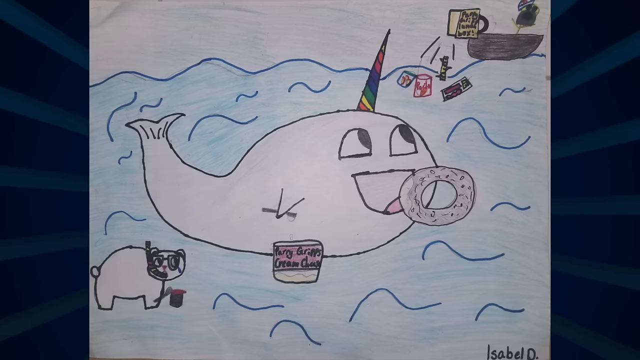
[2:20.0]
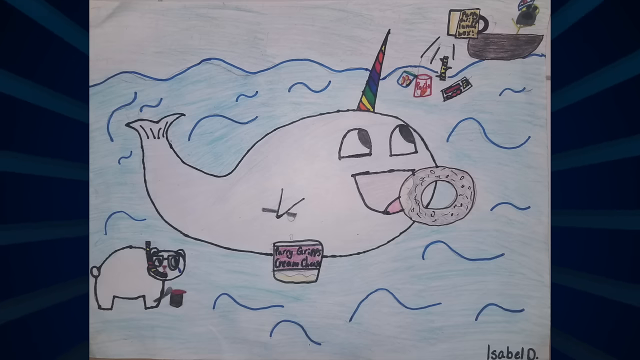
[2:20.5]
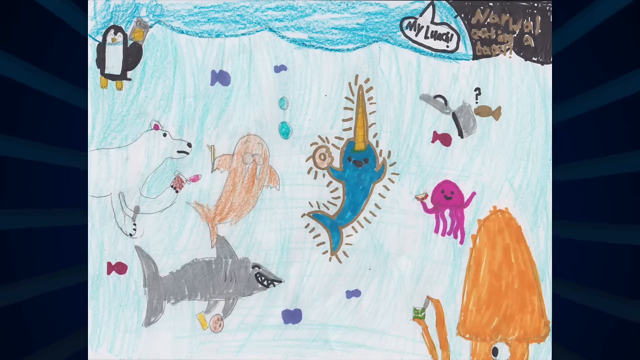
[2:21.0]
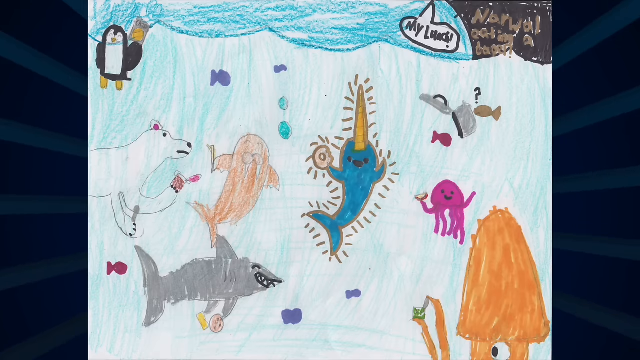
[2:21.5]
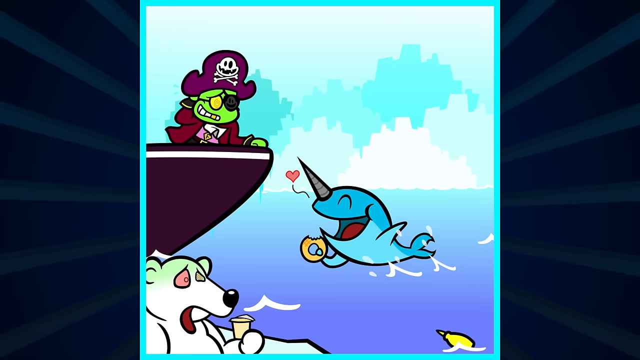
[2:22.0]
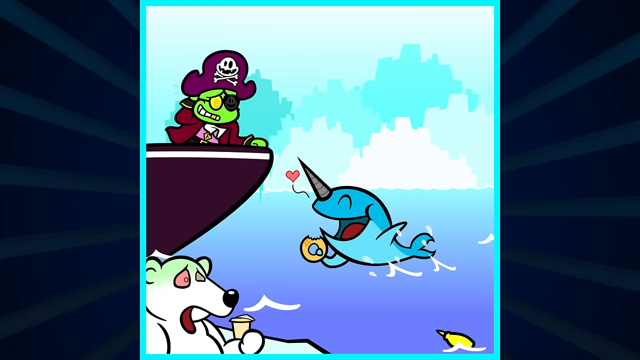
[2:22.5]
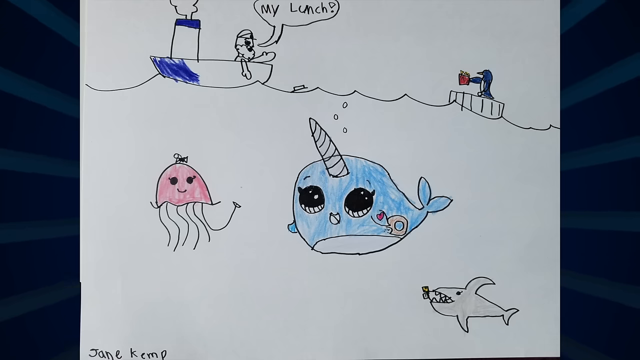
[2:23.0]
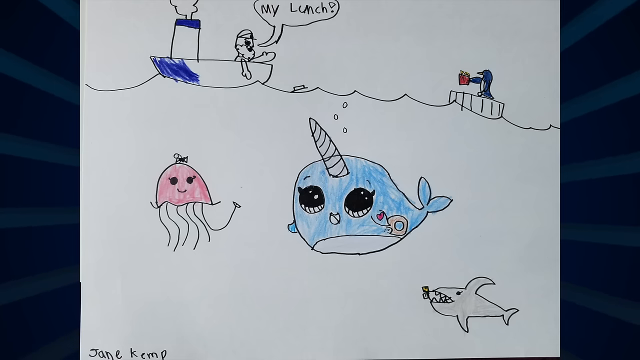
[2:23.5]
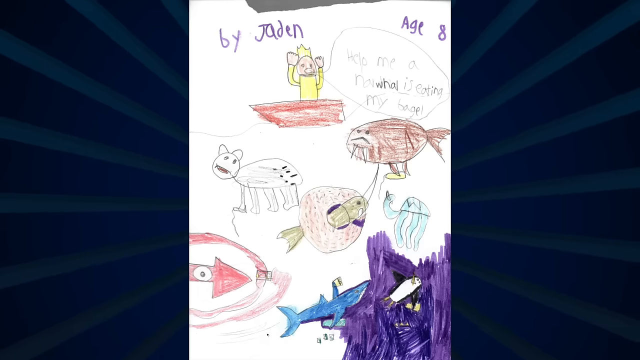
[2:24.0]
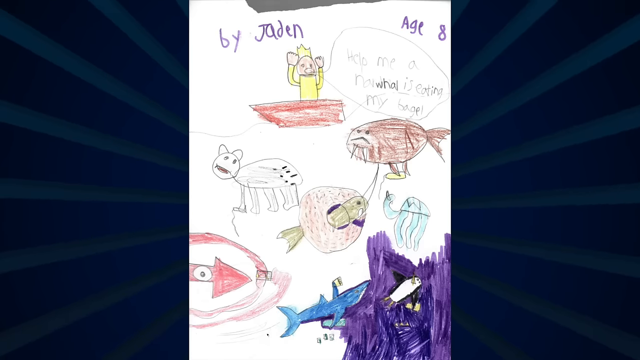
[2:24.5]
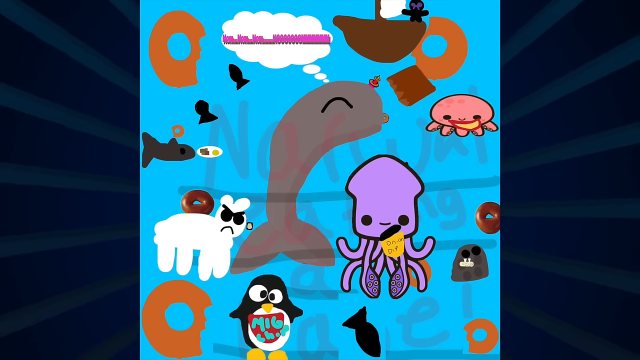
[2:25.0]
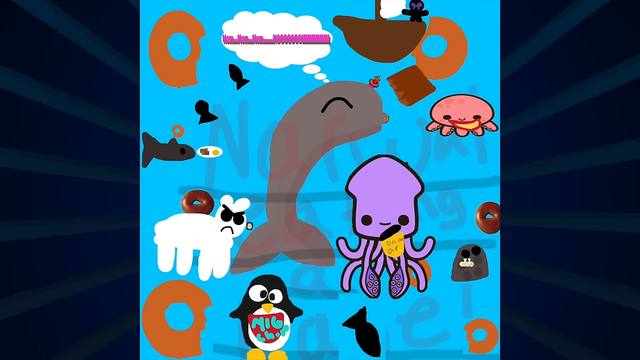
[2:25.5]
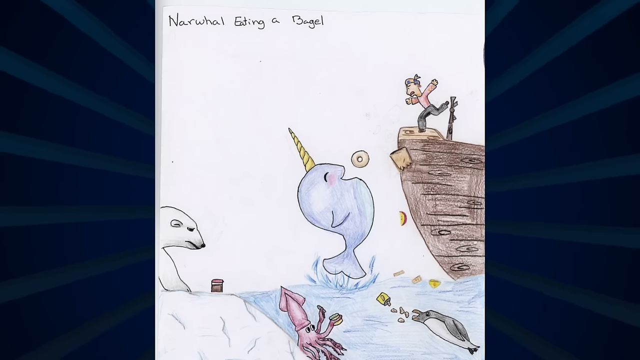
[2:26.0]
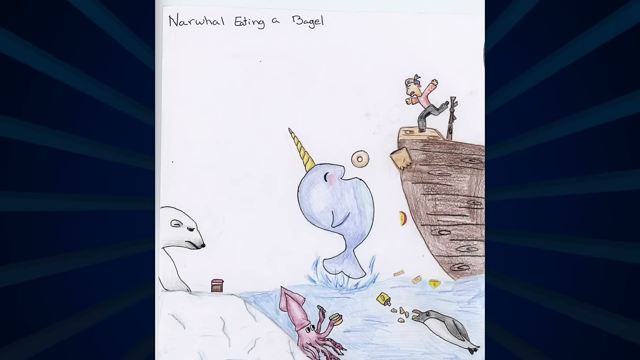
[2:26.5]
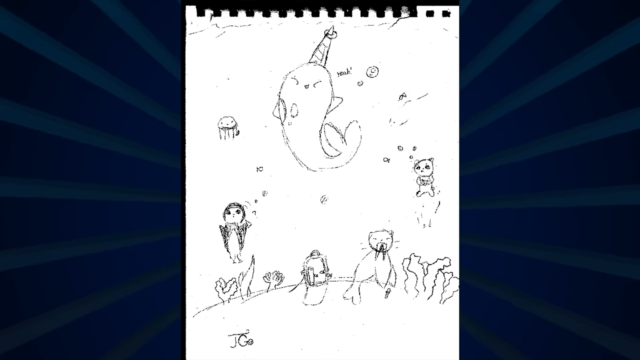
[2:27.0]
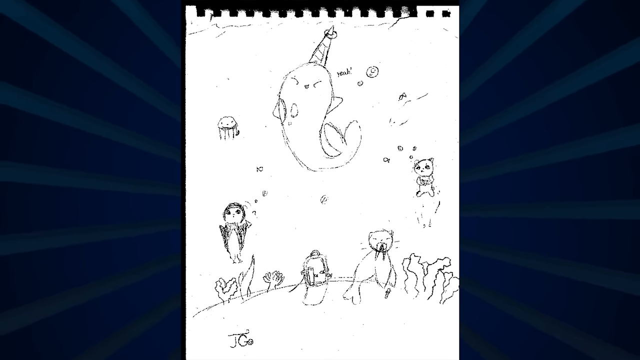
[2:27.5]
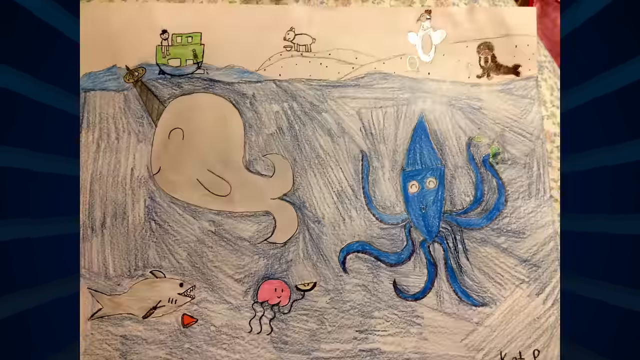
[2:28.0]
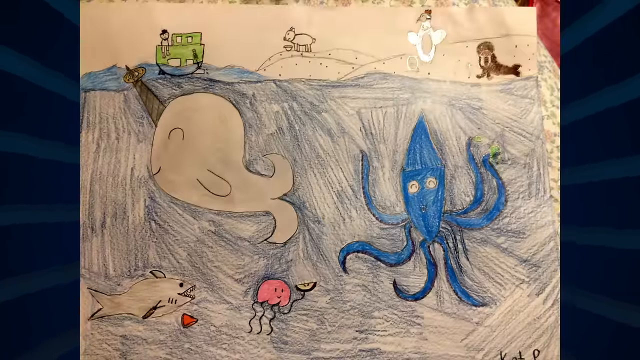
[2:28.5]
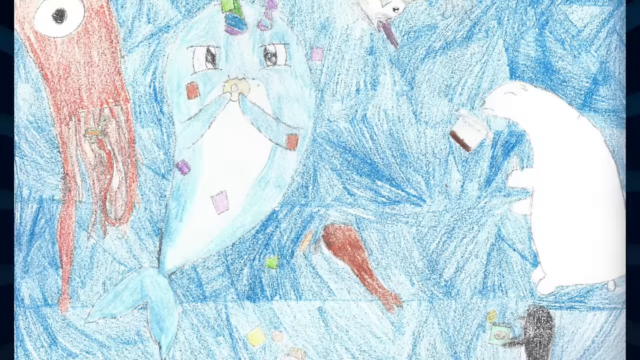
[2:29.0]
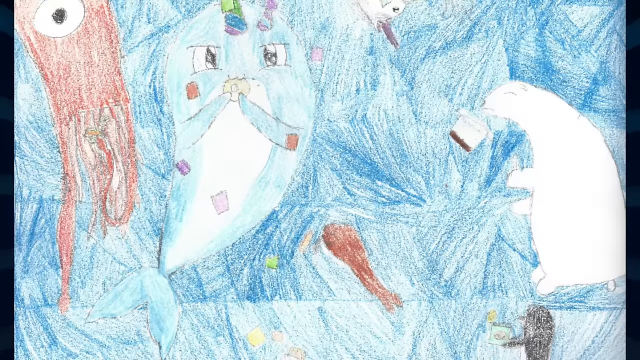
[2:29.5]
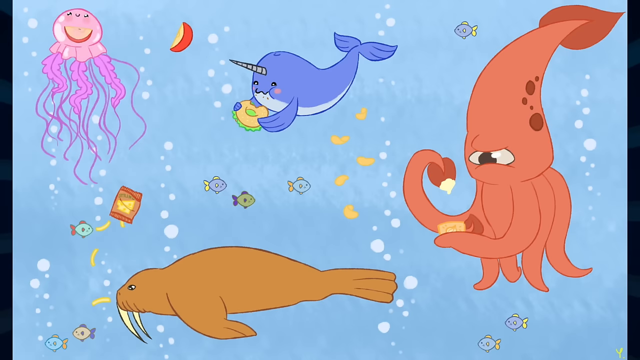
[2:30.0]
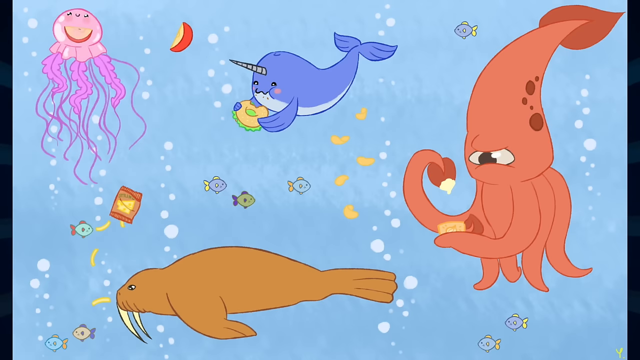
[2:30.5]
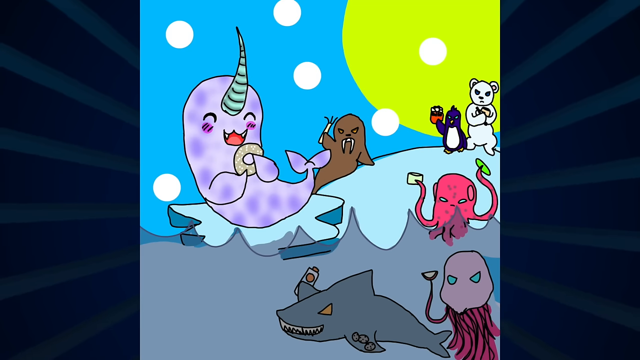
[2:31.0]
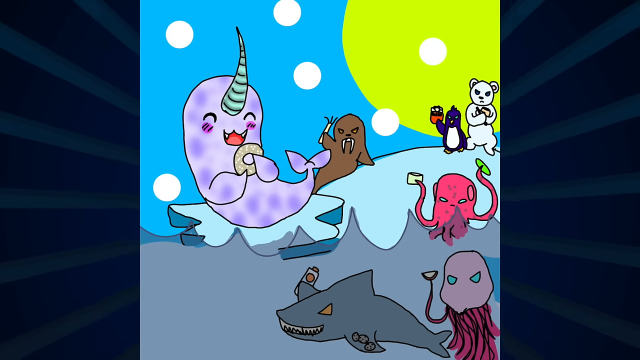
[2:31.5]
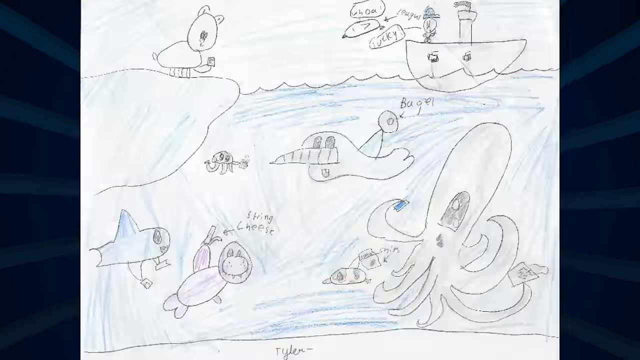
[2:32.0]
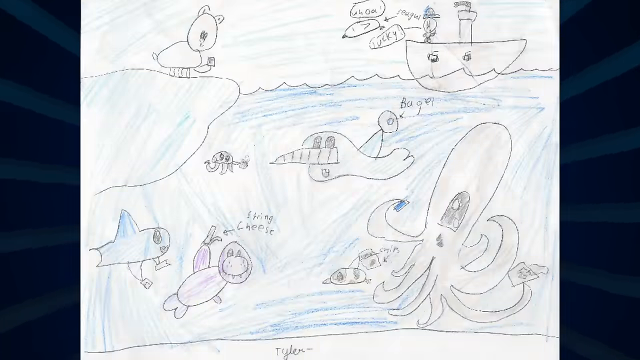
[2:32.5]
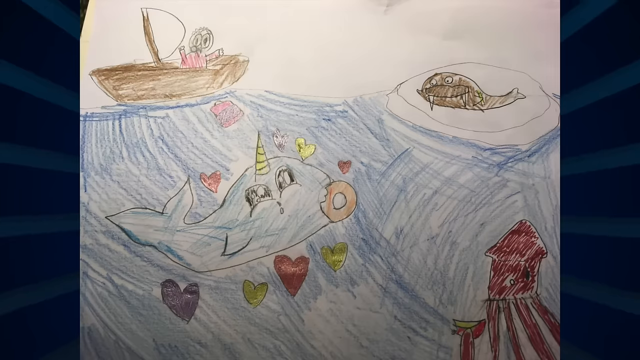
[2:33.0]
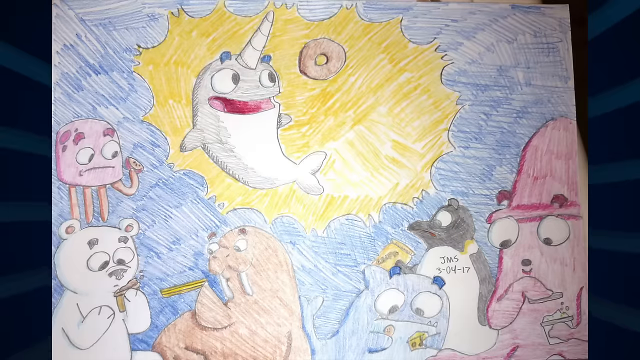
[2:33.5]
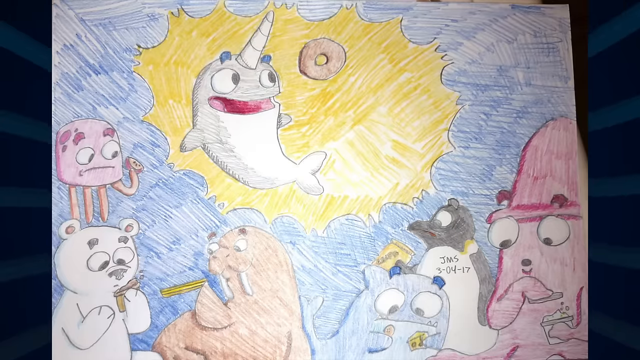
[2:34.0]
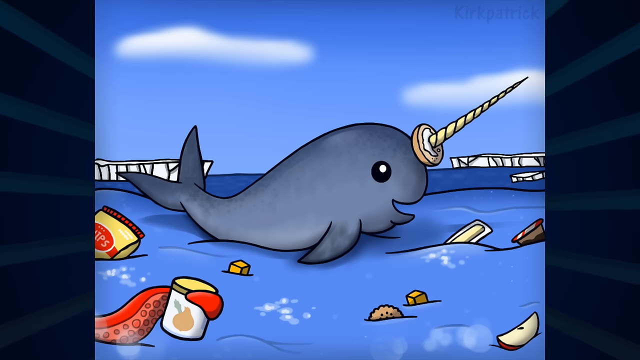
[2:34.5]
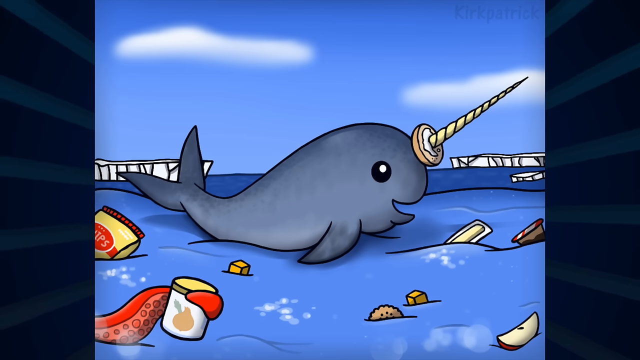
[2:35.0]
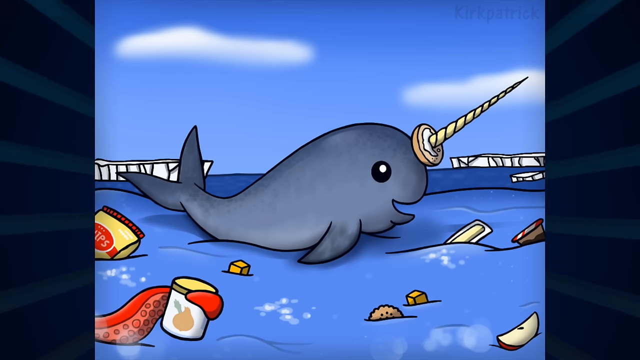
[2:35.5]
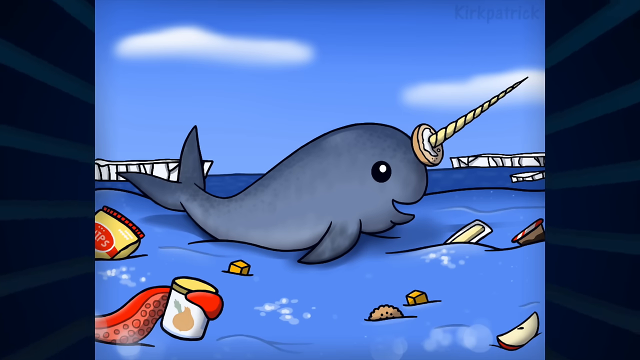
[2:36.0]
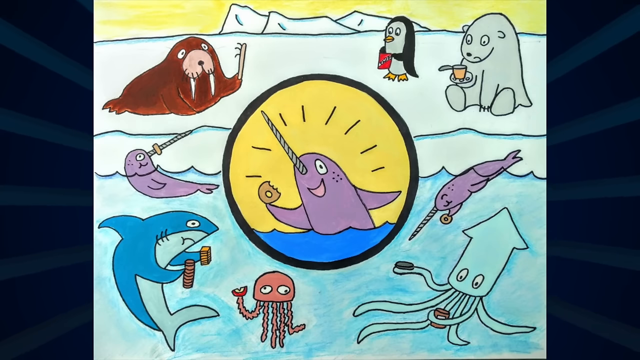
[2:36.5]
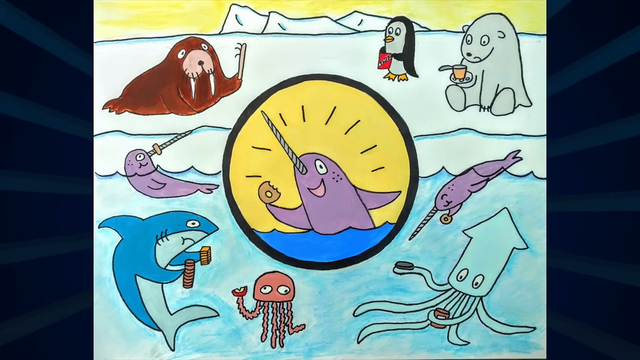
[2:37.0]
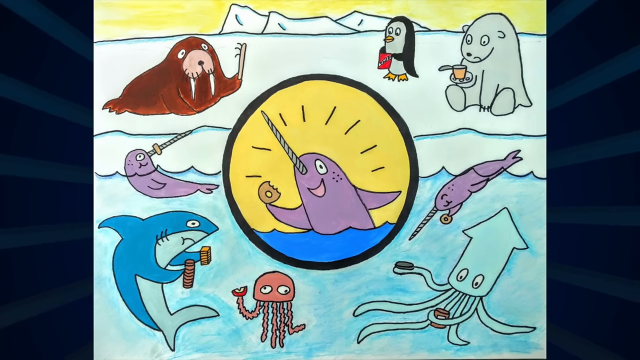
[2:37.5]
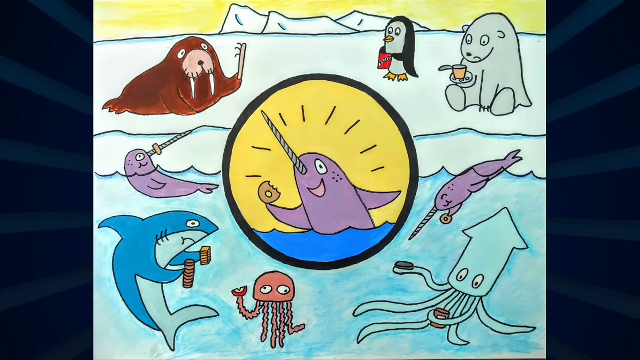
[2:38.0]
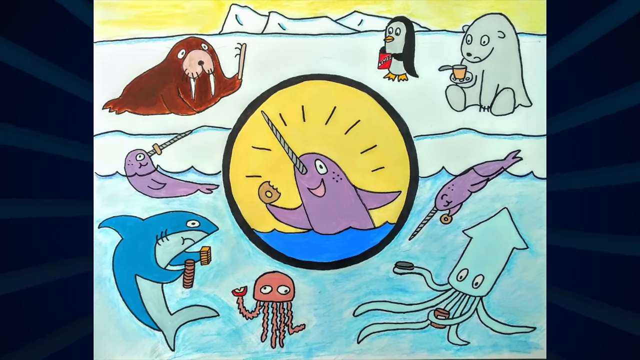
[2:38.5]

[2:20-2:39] A narwhal in the ocean gets ready to take a bite of its bagel, with a polar bear near it eating a pudding cup and a fisherman in a boat throwing food into the sea. Another picture shows multiple animals: a penguin holding chips, a polar bear holding pudding, a walrus holding food, a shark holding cheese and crackers, the narwhal with its bagel, the squid with its slice of apple, and an octopus also holding food. A picture shows a pirate looking down at the narwhal, who happily holds its bagel, while in the same picture a polar bear frowns at its pudding. The next drawing shows a fisherman yelling "My lunch" while a happy squid, narwhal, shark and penguin all enjoy food. The next few drawings depict all the animals happily surrounded by food or being fed by fishermen.